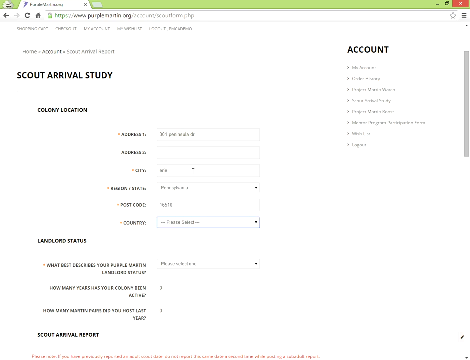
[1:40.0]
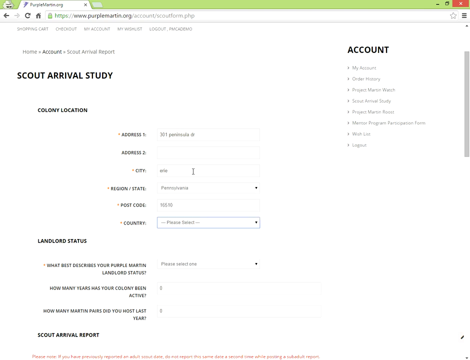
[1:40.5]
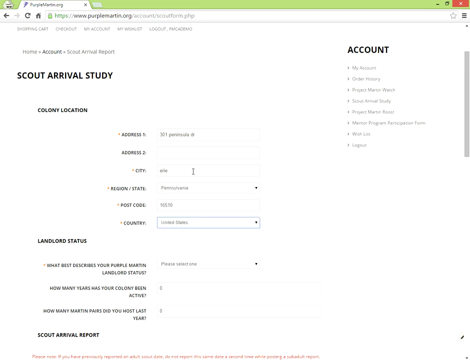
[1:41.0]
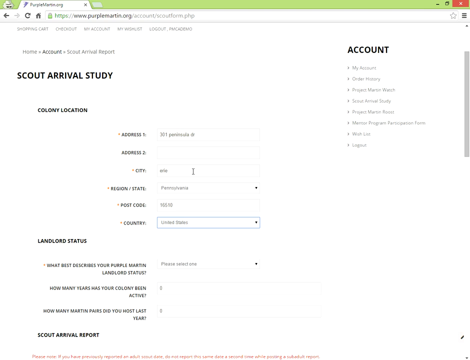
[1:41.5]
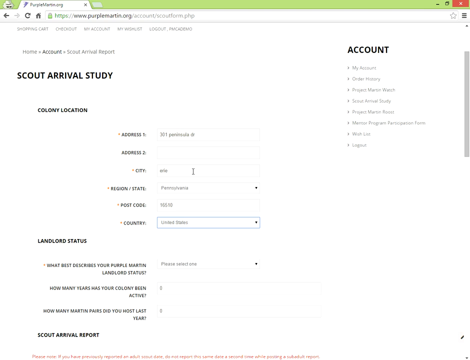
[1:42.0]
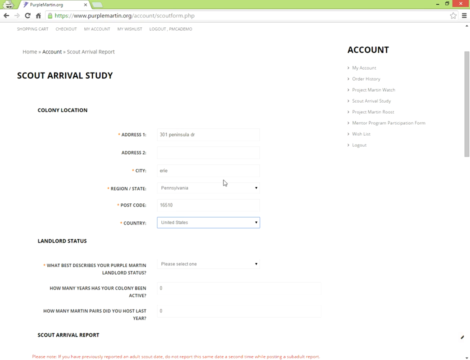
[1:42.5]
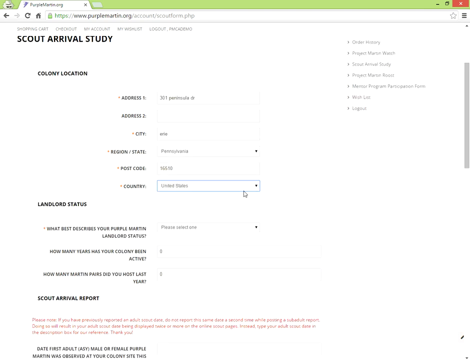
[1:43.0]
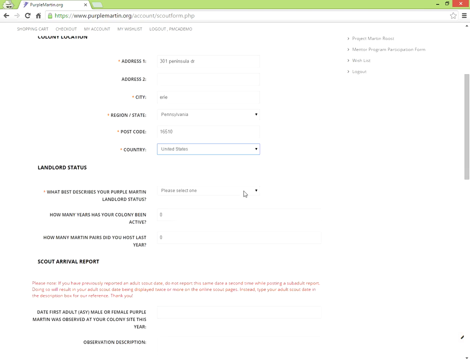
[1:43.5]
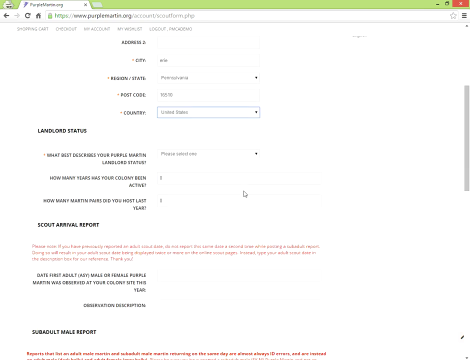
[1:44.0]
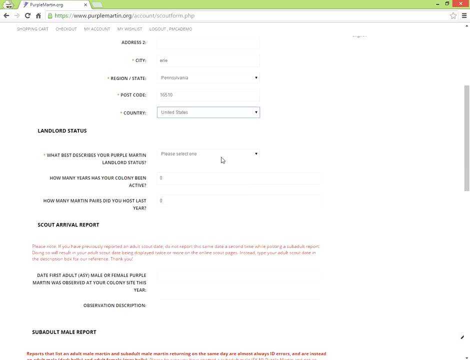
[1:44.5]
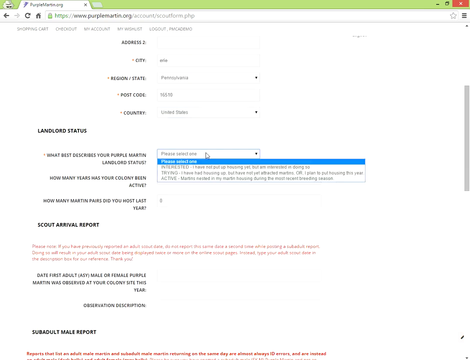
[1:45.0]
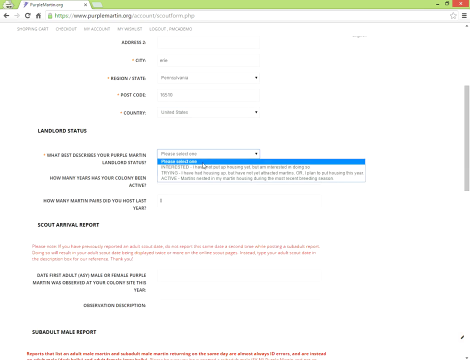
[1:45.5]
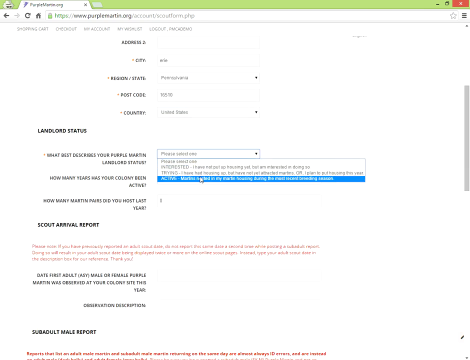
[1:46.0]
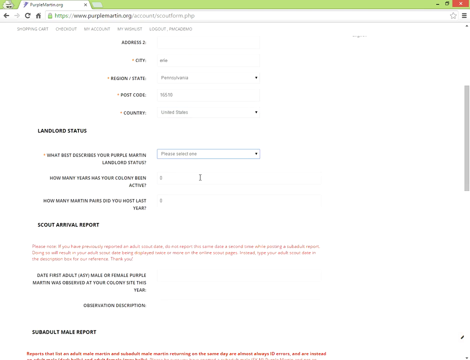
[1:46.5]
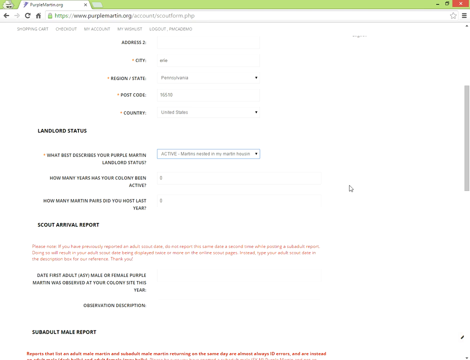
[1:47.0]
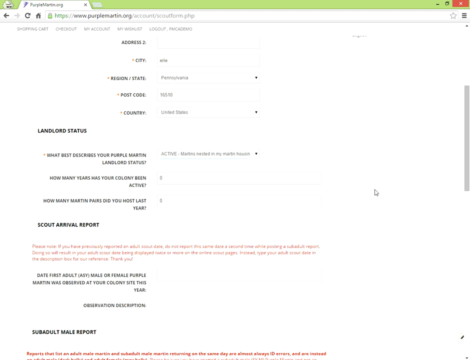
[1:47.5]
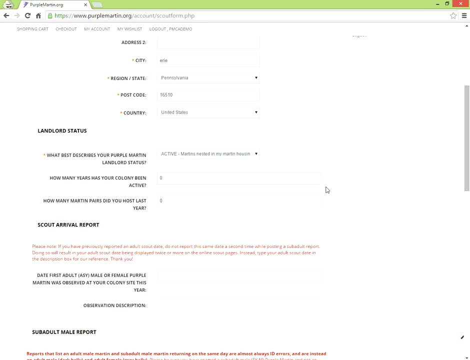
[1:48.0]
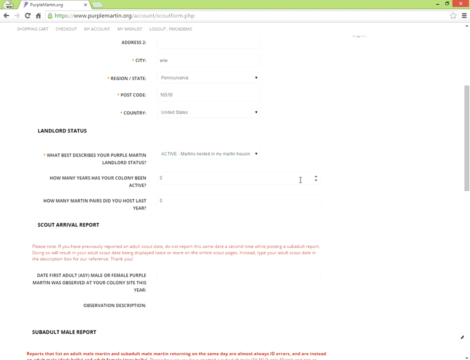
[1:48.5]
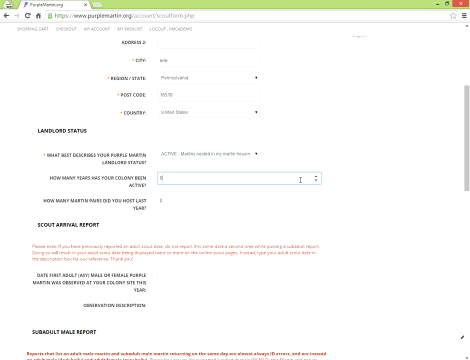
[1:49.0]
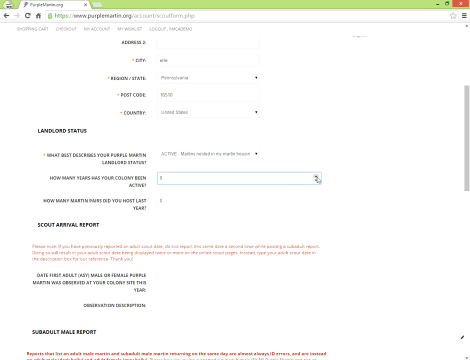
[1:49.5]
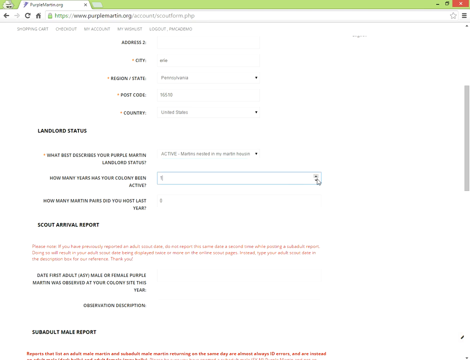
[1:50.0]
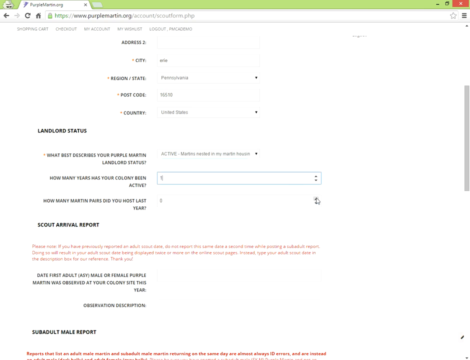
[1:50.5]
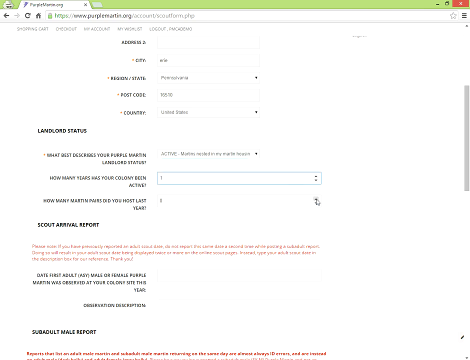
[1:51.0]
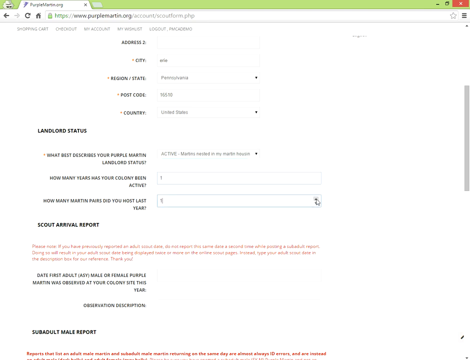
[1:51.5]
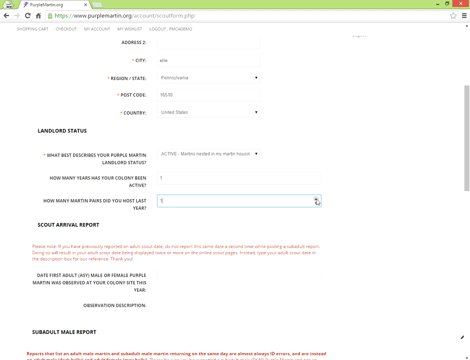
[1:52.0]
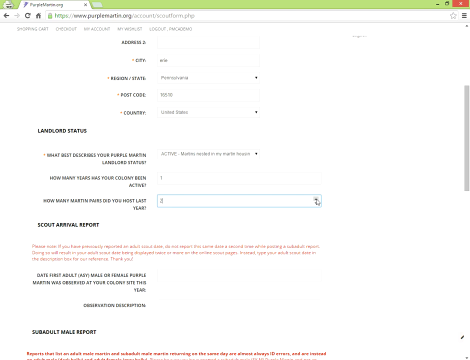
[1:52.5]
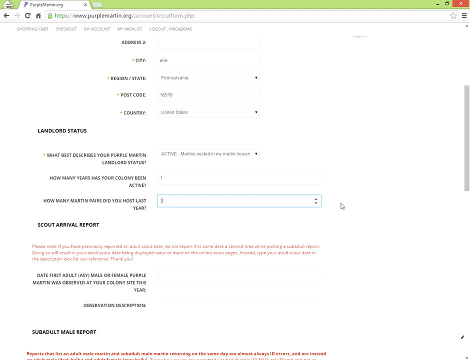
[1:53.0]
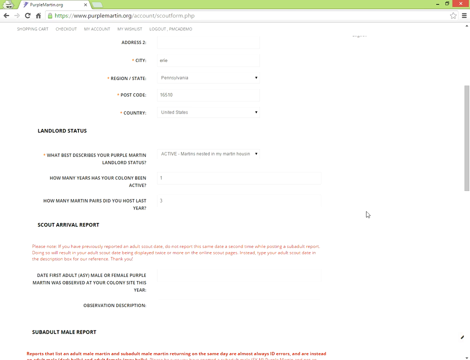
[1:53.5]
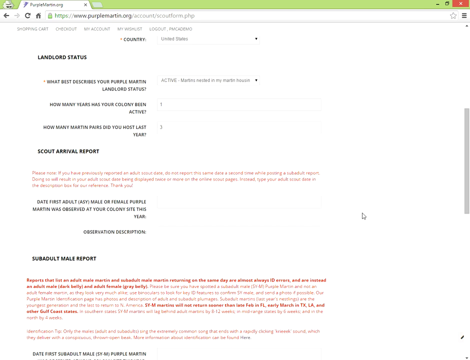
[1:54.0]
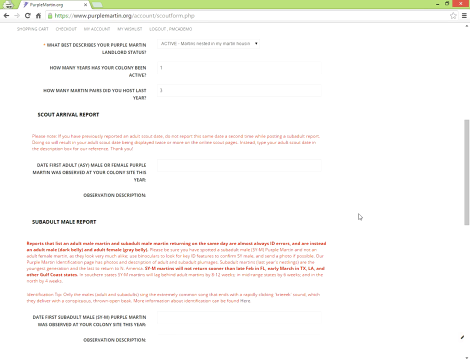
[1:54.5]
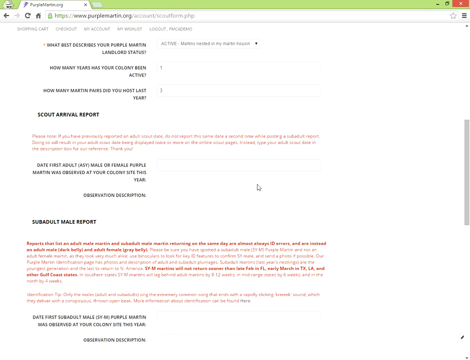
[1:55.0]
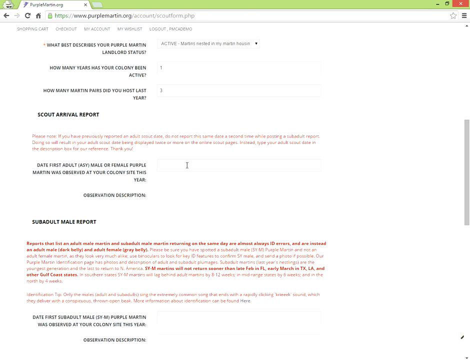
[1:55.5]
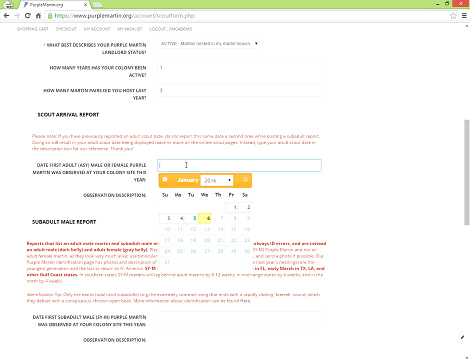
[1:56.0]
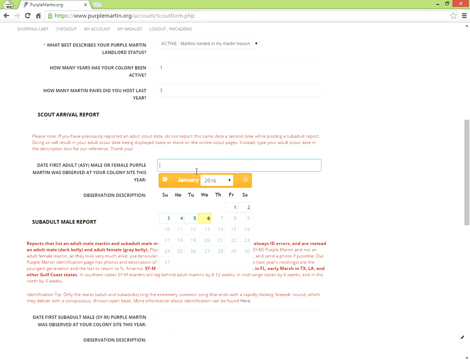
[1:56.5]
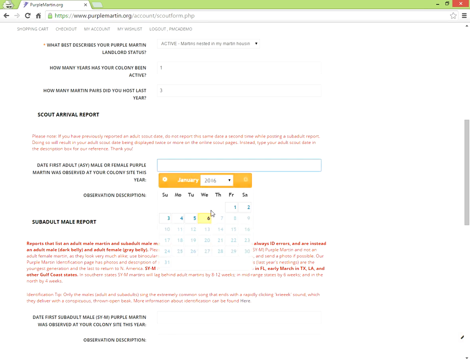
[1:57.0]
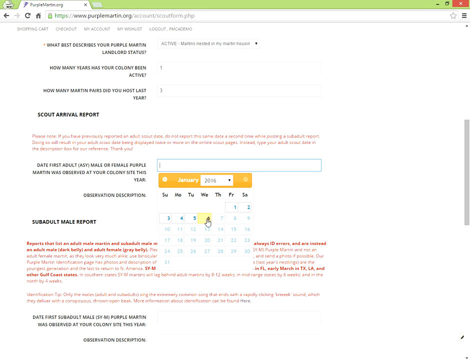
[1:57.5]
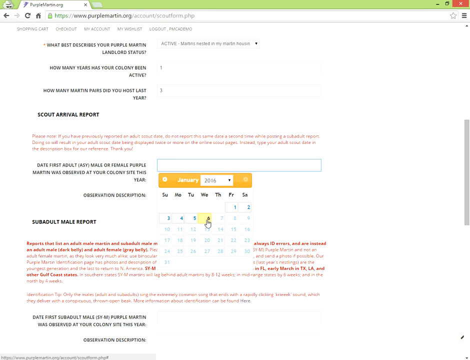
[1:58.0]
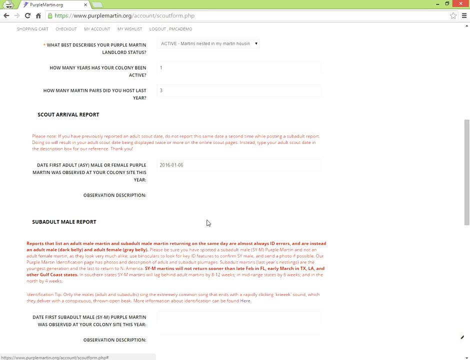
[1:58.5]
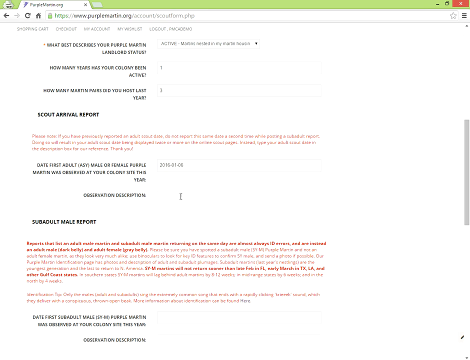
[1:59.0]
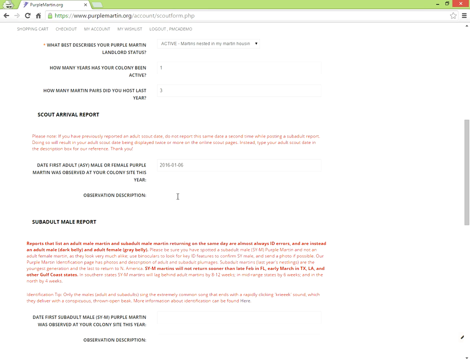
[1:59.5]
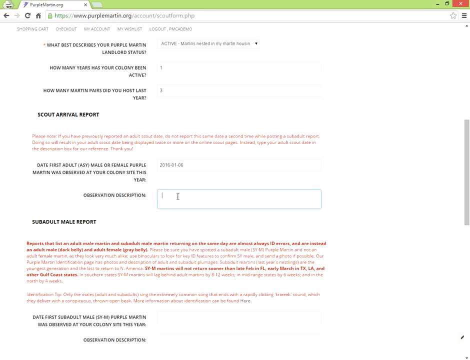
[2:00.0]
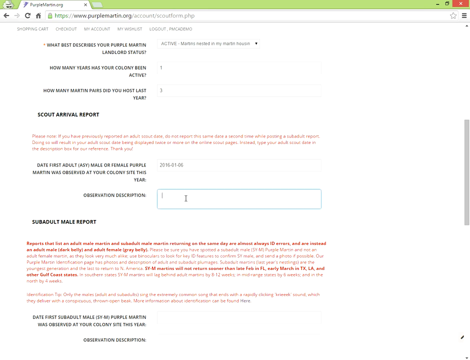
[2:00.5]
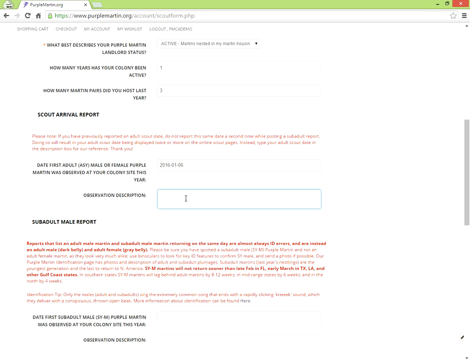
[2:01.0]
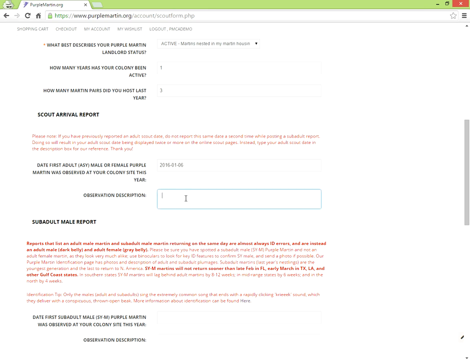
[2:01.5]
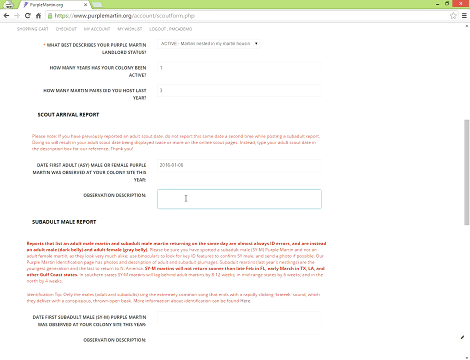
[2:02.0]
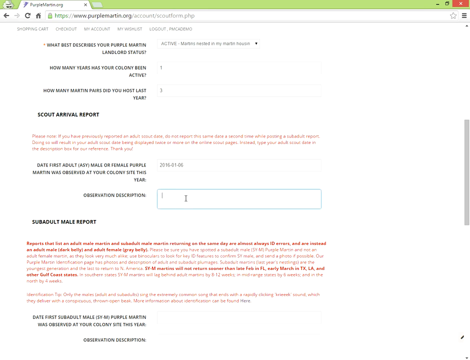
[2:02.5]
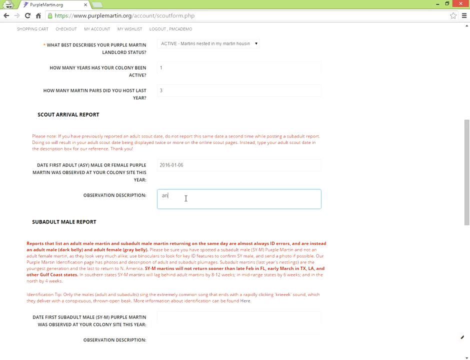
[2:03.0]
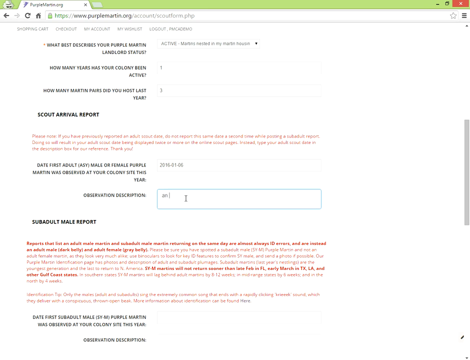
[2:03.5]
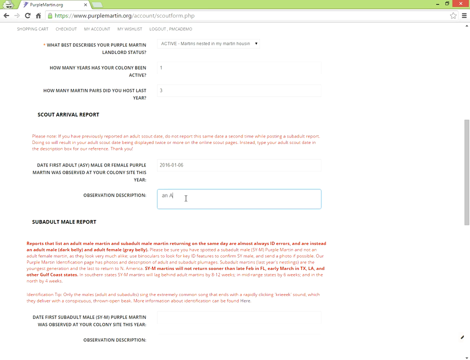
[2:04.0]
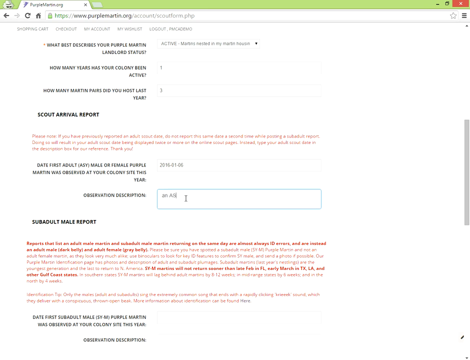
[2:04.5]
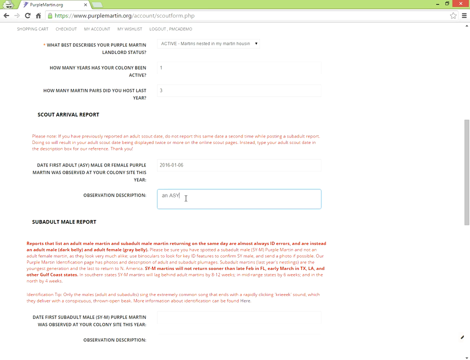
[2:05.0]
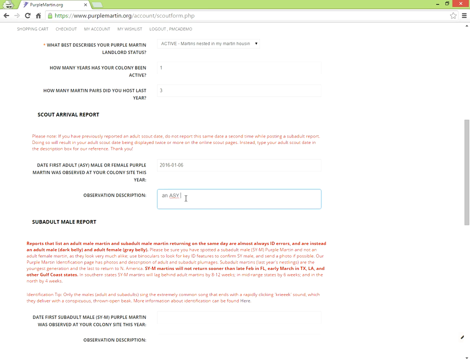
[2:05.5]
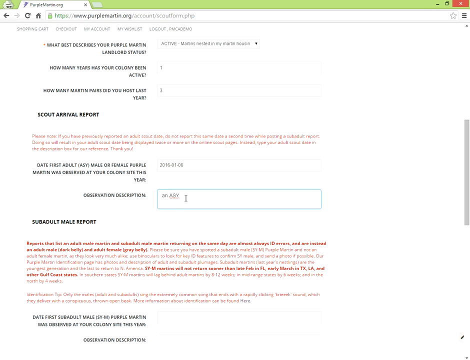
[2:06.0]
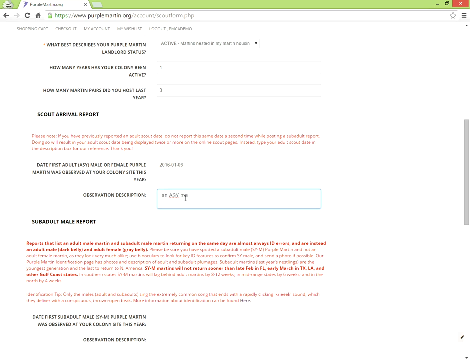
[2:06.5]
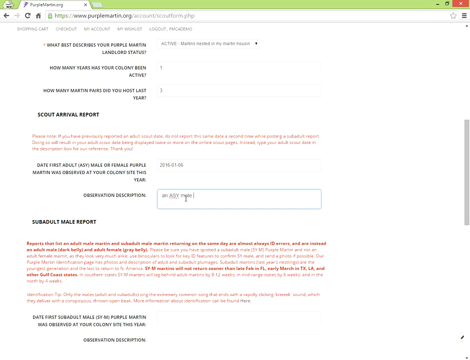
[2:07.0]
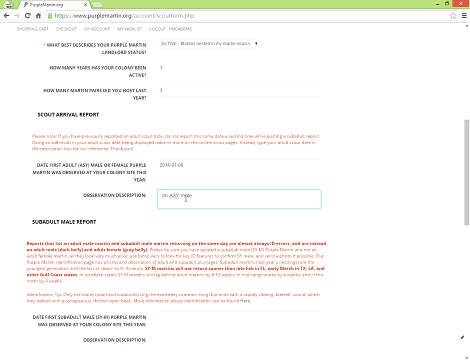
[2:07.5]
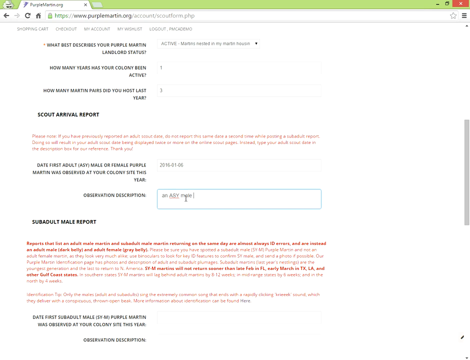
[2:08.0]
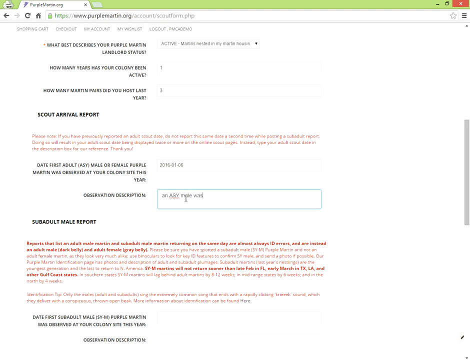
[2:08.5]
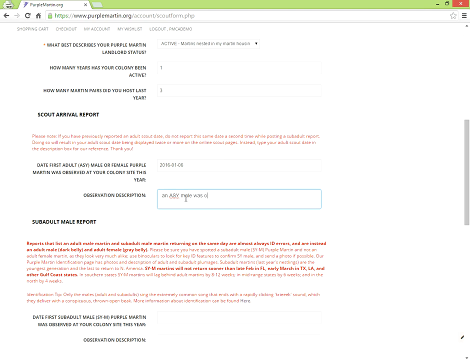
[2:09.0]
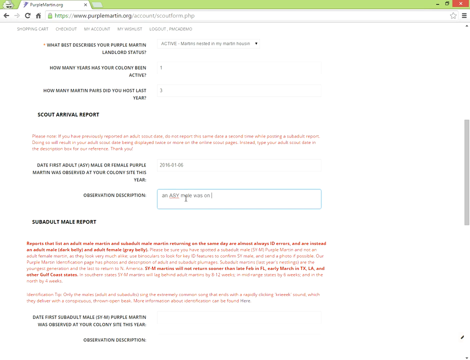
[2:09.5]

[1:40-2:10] The Scout Arrival Study webpage on the purplemartin.org website is shown as the form is filled out, with the person answering the questions by choosing from drop-down menus and typing in fields. At certain points there is small red disclaimer text that cannot be read. One readable subheading says "date first adult ASY male or female purple martin was observed at your colony site this year". The person clicks in that field, a pop-up calendar opens, and a date is chosen; the year is 2016. Below is a field for an observation description.